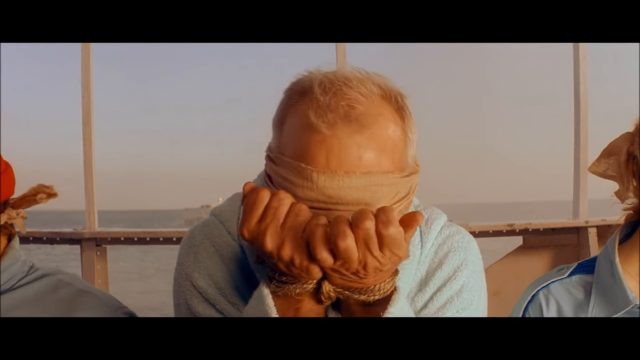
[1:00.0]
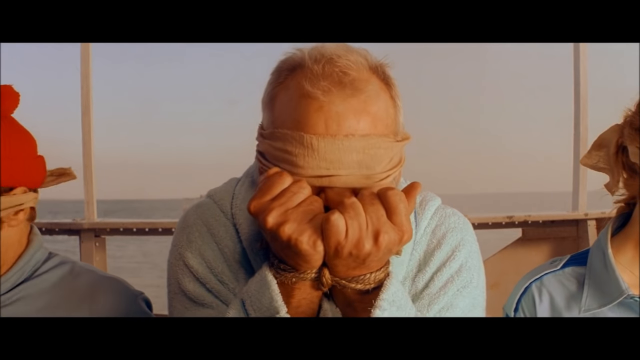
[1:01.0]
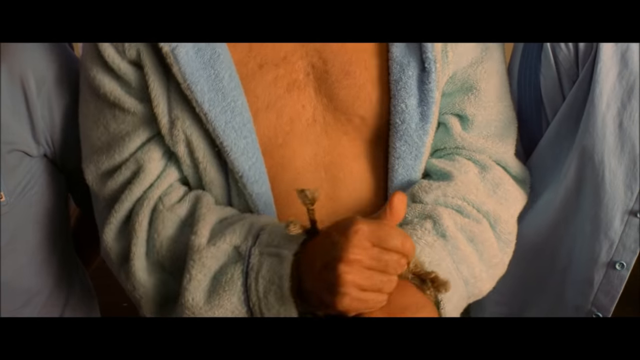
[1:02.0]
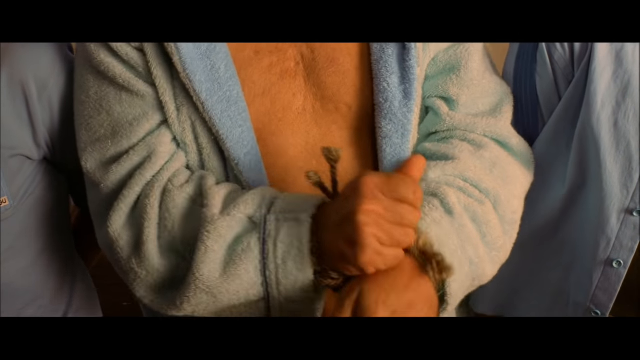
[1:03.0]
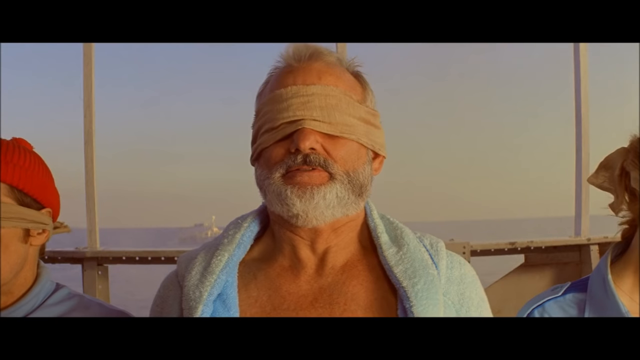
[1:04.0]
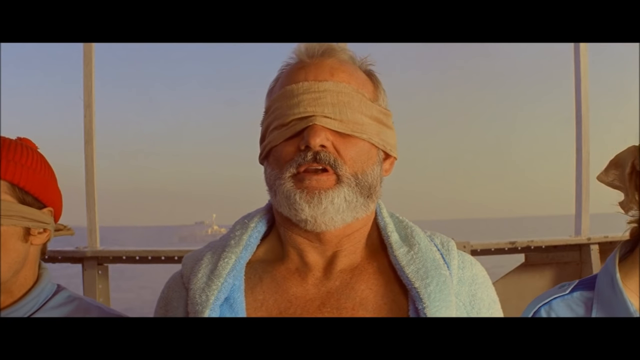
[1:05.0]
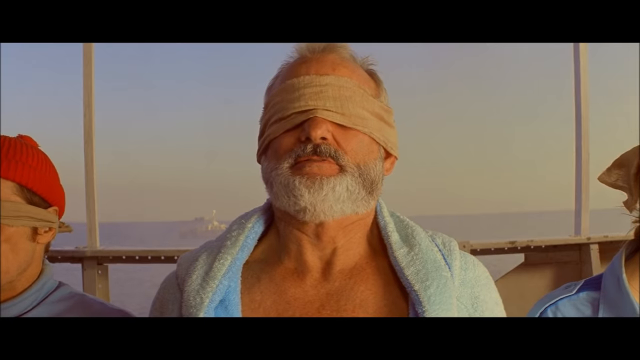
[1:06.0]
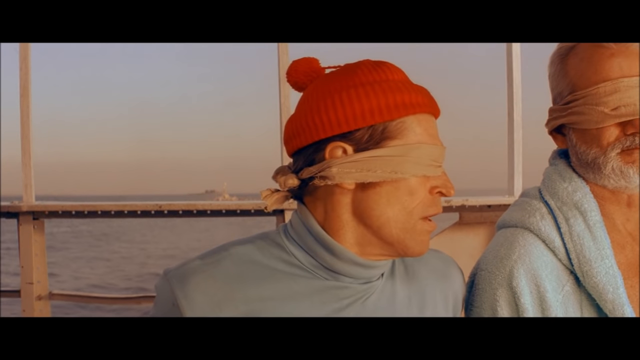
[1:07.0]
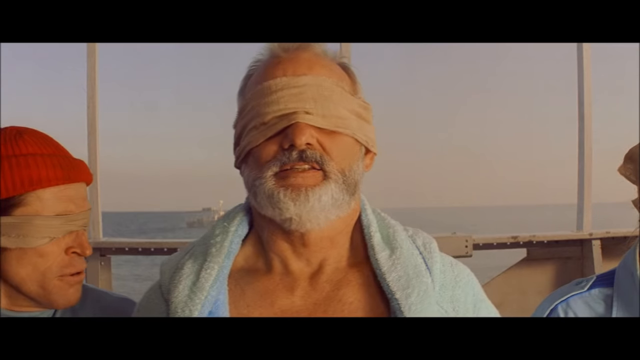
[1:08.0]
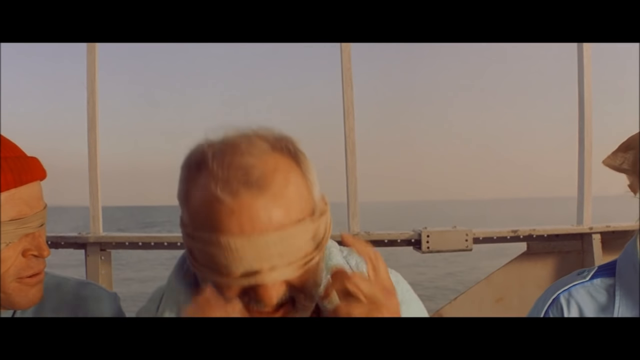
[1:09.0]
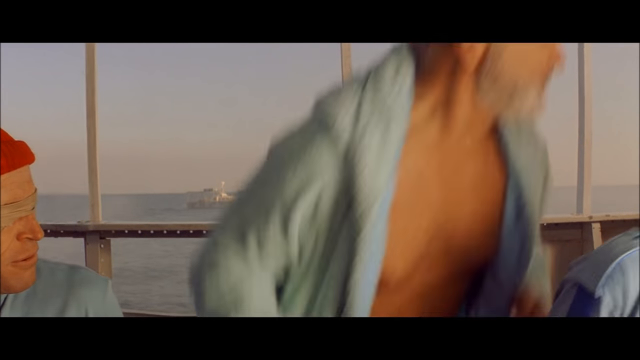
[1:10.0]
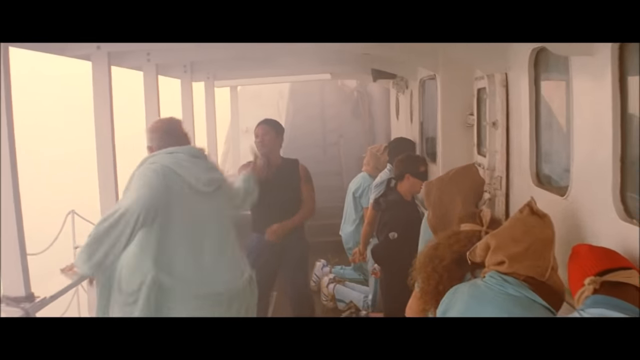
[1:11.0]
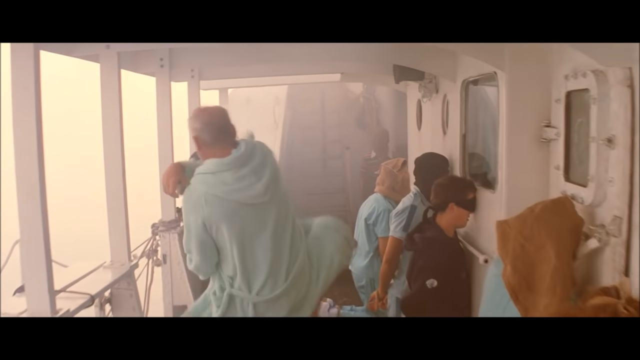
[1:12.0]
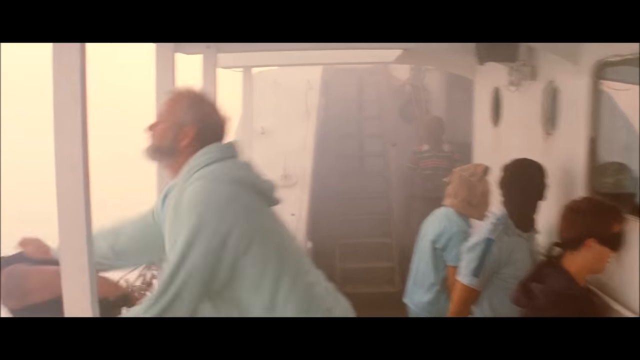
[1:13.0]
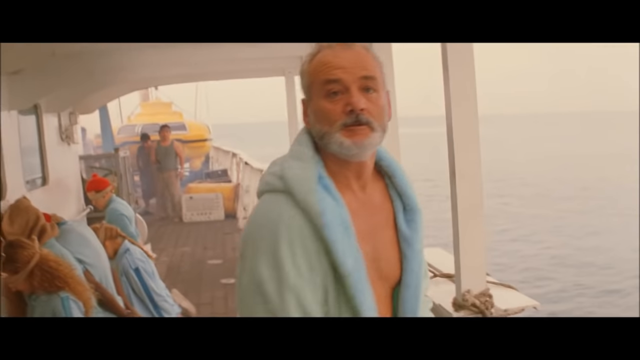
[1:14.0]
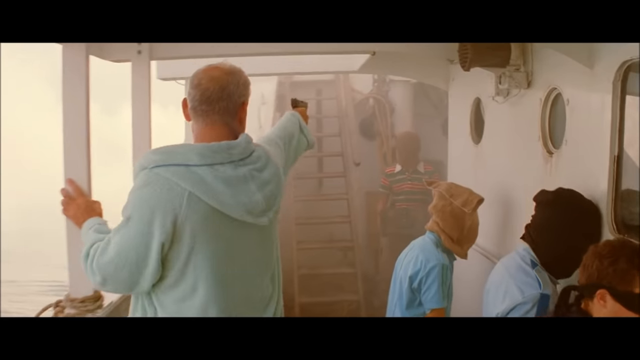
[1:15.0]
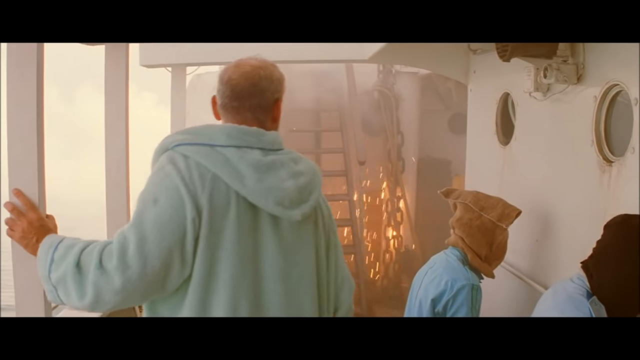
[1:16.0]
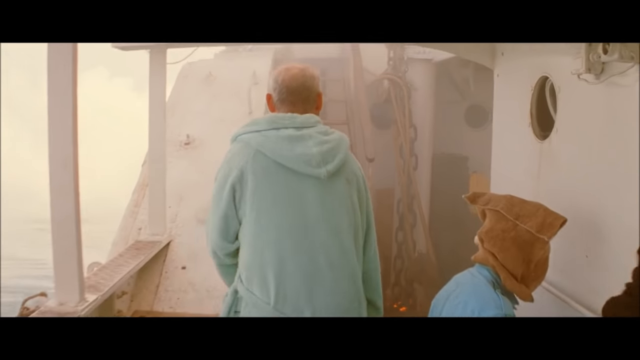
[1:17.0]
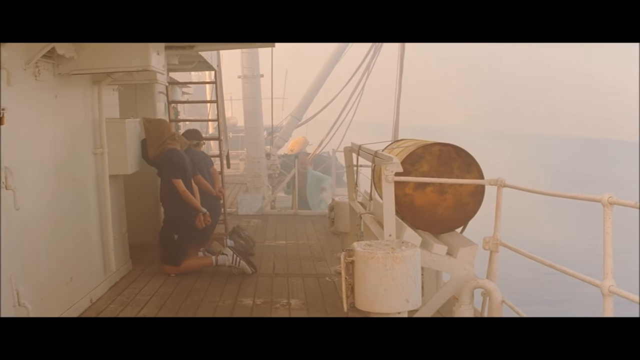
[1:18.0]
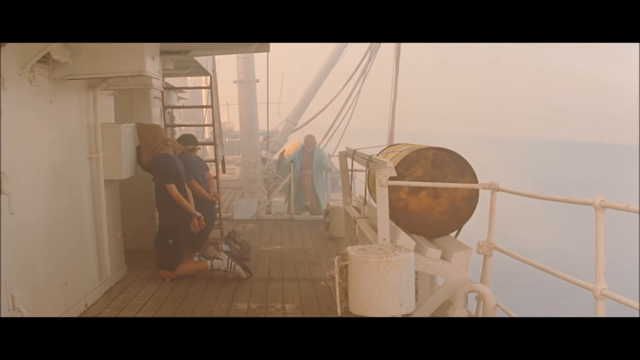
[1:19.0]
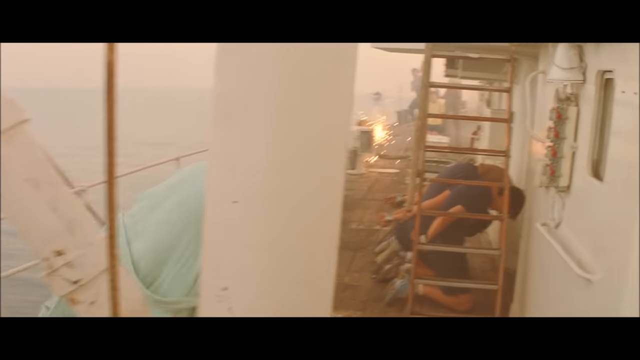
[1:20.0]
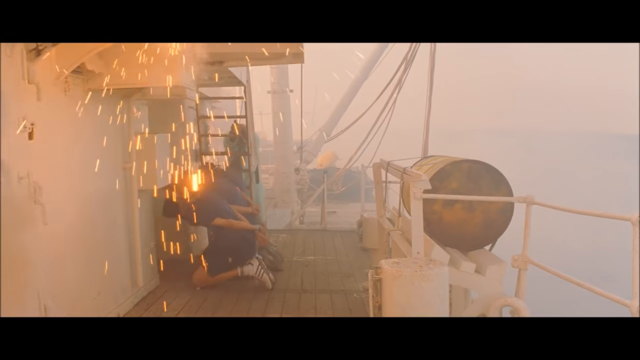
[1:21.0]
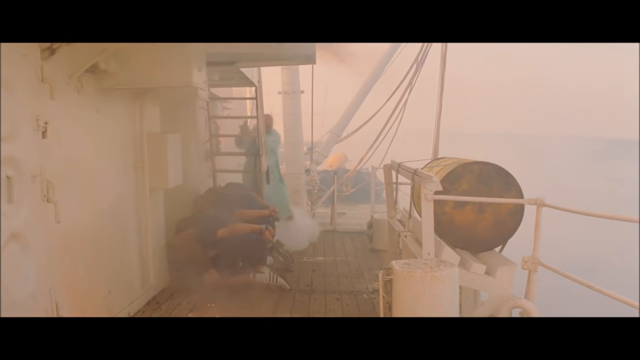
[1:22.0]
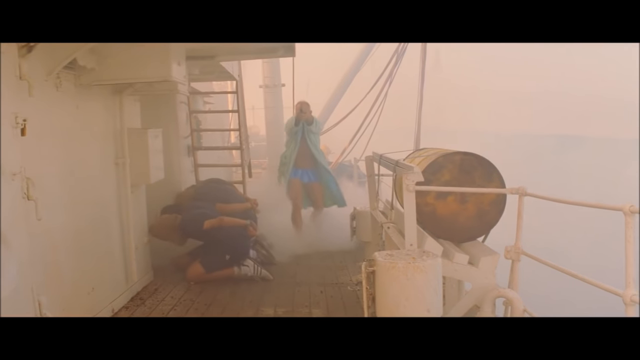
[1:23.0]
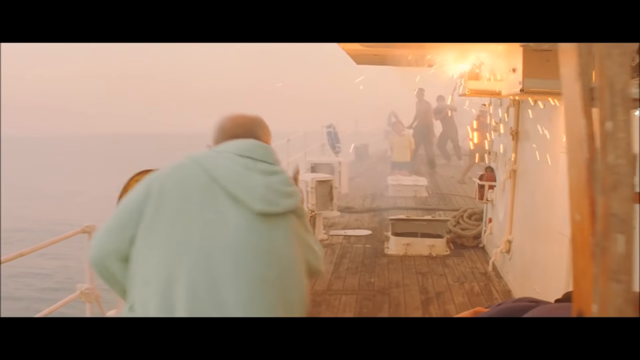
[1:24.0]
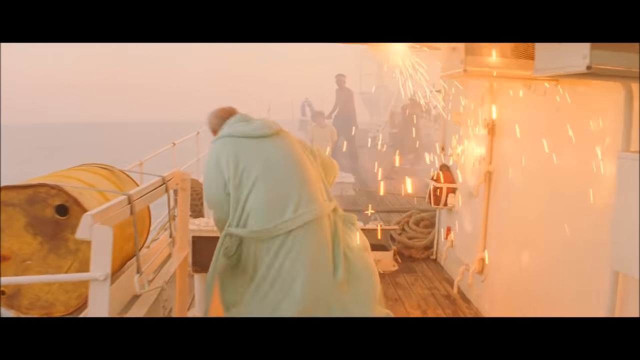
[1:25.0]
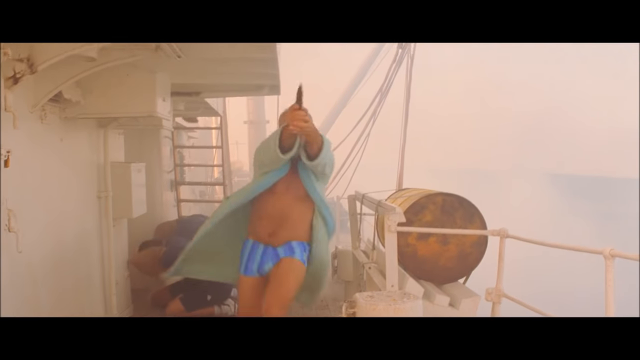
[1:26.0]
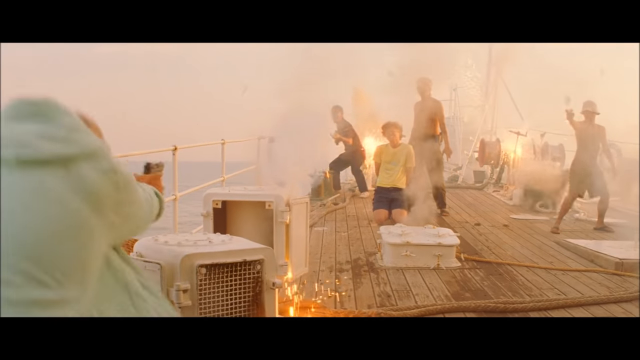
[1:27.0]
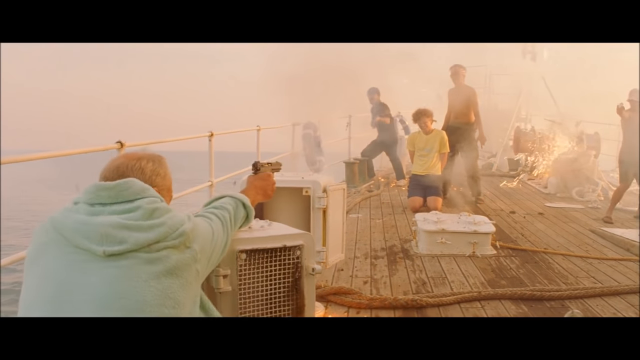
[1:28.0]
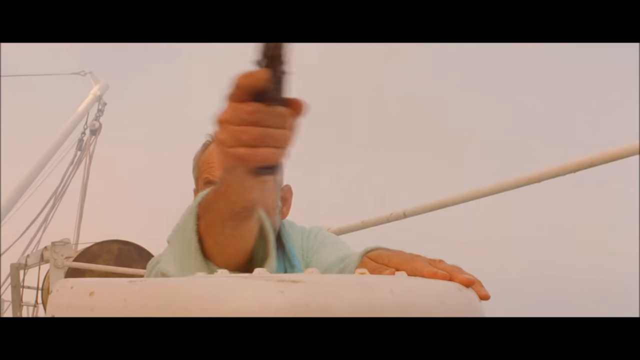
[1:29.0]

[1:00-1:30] Bill Murray is in the center of the screen on the boat, biting the ropes tying his hands, his eyes still covered by the cloth. He tries to break the ropes on his hands while continuing to speak to Cate Blanchett and Willem Dafoe at his sides, and the camera shows Willem Dafoe speaking to him. Bill Murray manages to remove the ropes, takes the cloth off his eyes, hits a man who is holding a revolver and throws him off the boat. He then shoots at a chain on the boat, missing the man who was standing there; the chain throws off sparks where the bullet hits it, and more shots are fired. As Bill Murray walks and gets the gun, the entire crew of the boat can be seen kneeling toward walls, all tied up.